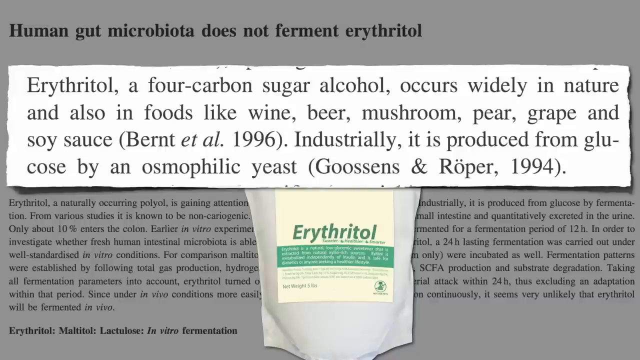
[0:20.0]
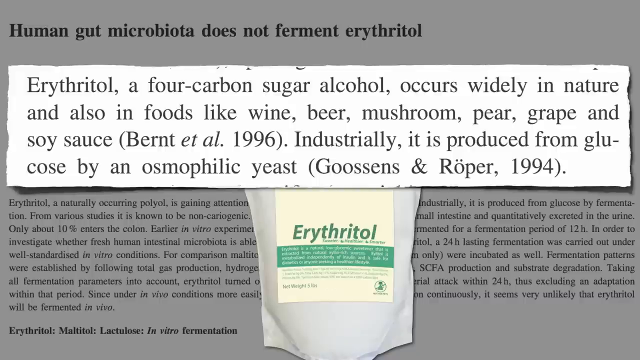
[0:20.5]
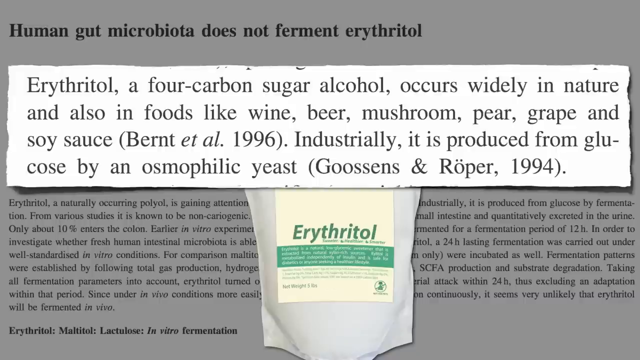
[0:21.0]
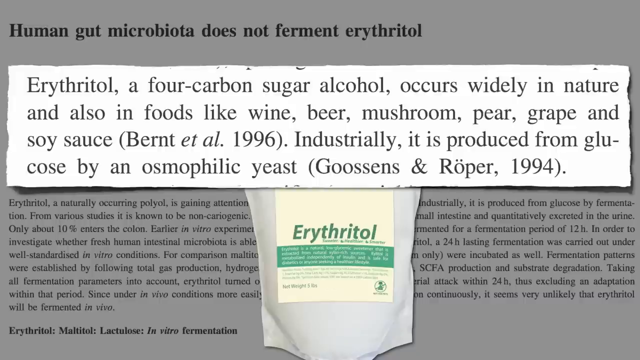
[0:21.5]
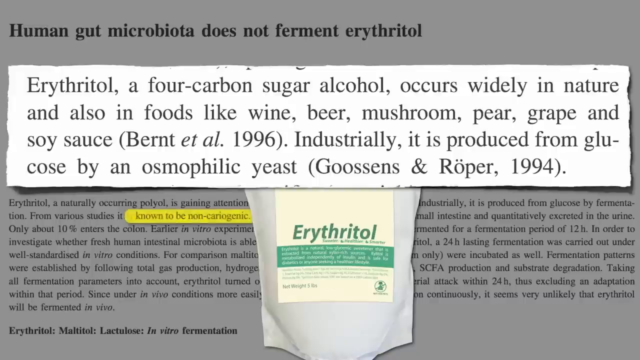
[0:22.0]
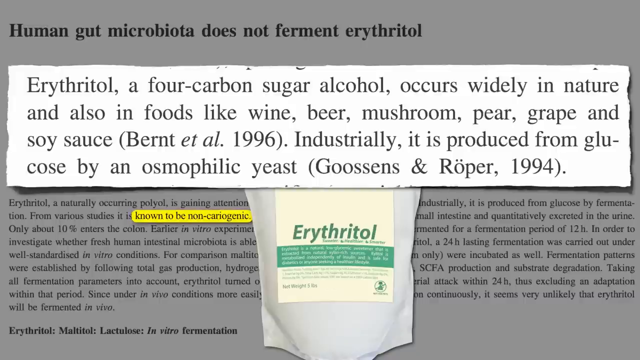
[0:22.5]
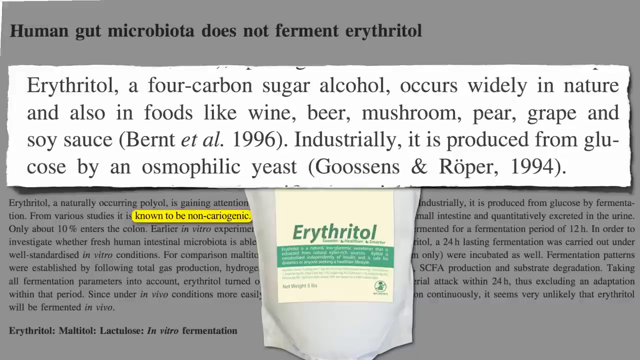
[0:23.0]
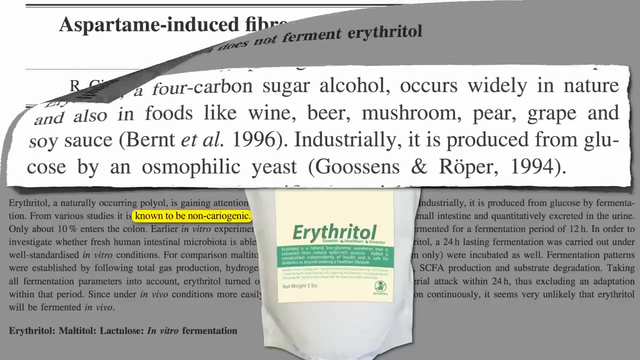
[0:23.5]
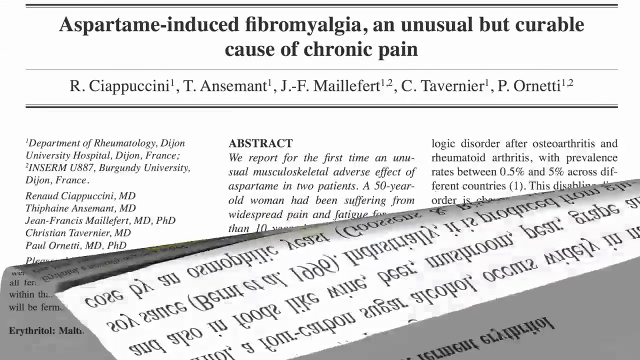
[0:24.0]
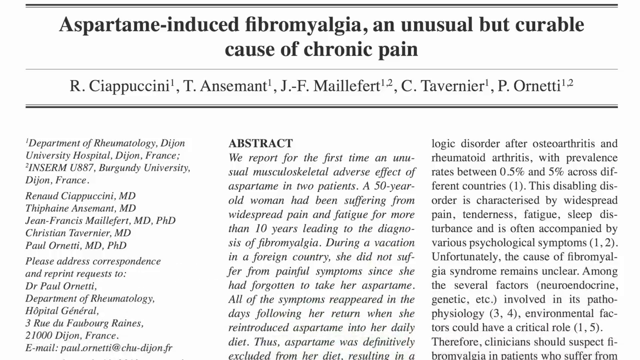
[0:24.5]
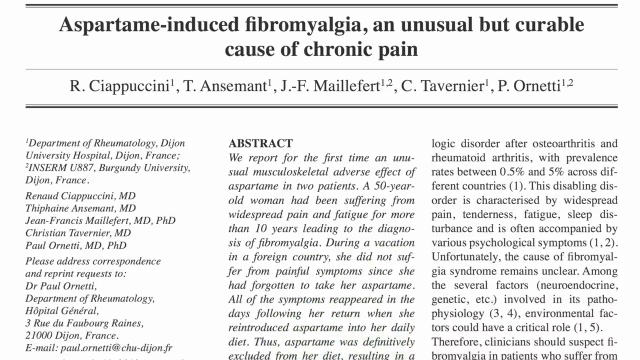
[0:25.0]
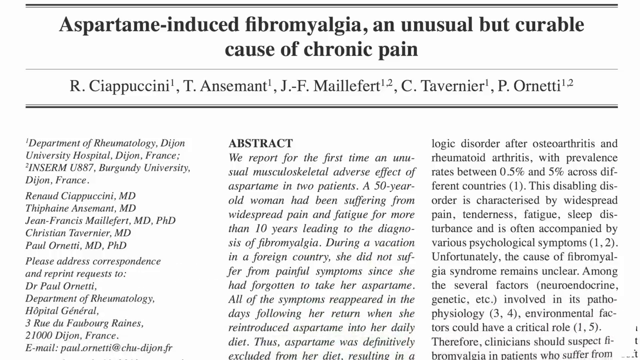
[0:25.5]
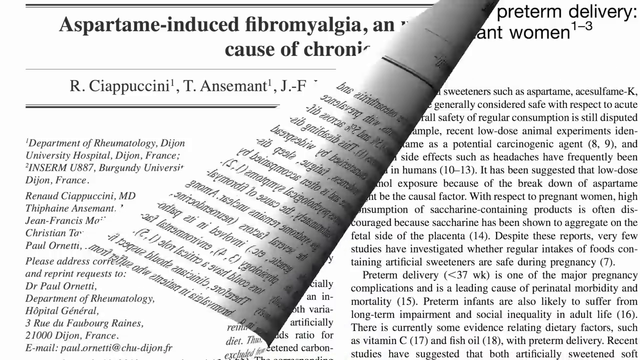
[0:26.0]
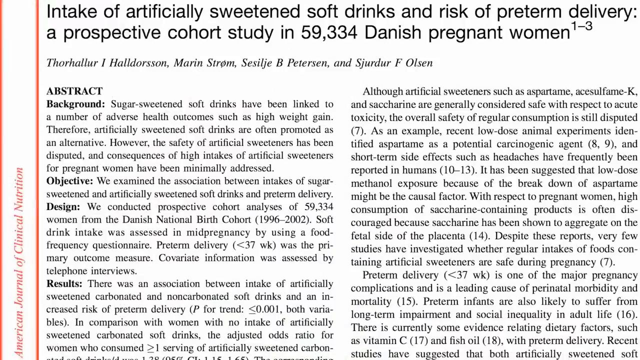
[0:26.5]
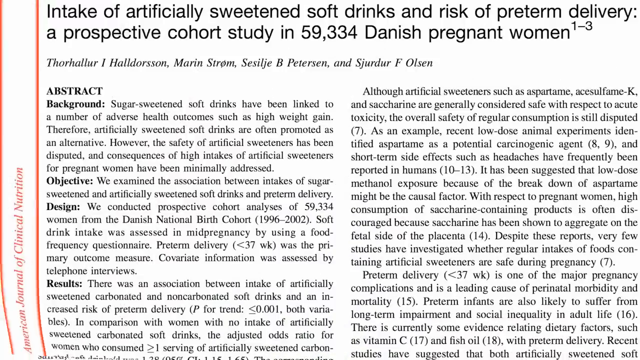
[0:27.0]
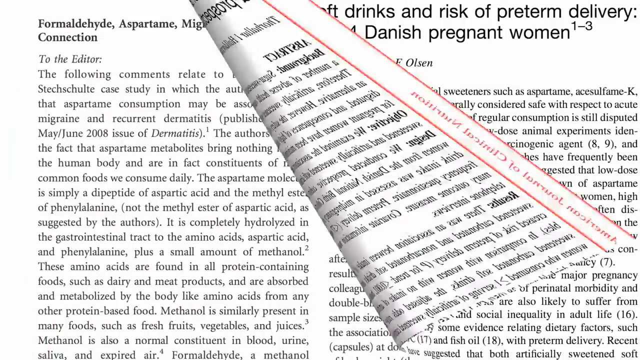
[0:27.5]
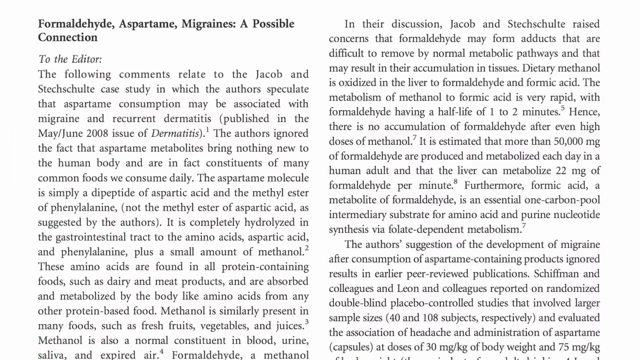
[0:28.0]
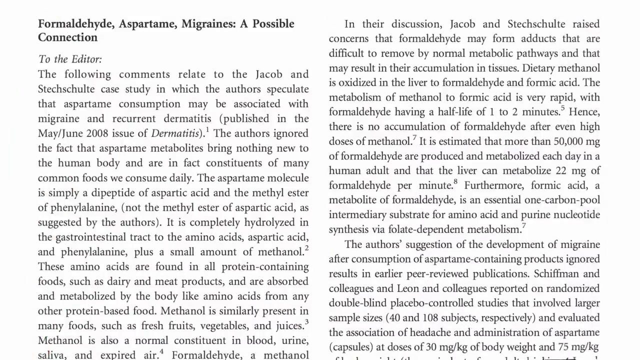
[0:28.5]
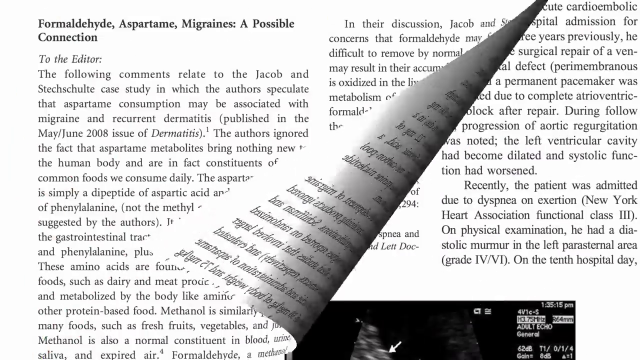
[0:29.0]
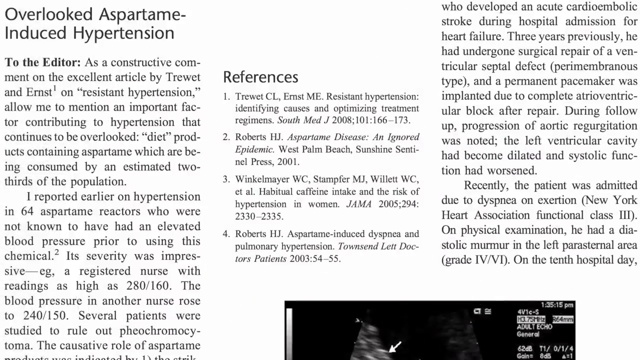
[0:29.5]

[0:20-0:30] What appears to be a bag of erythritol is at the bottom of the screen: a white bag with a tan label and green letters. At the top, black text on a white background reads "human gut microbiota does not ferment erythritol." Below it, bold text on a white background reads: "erythritol, a four-carbon sugar alcohol, occurs widely in nature and also in foods like wine, beer, mushroom, pear, grape, and soy sauce (BERNT et al. 1996). Industrially, it is produced from glucose by osmophilic yeast (Goossens and Roper, 1994)."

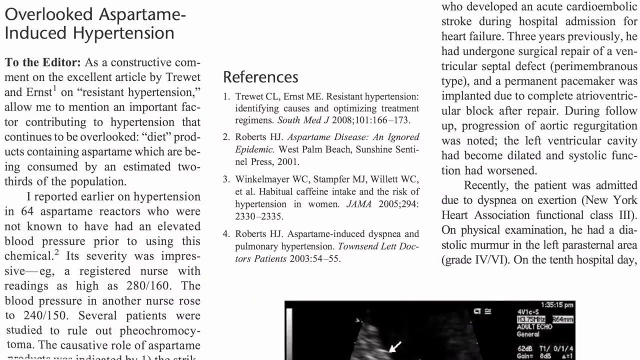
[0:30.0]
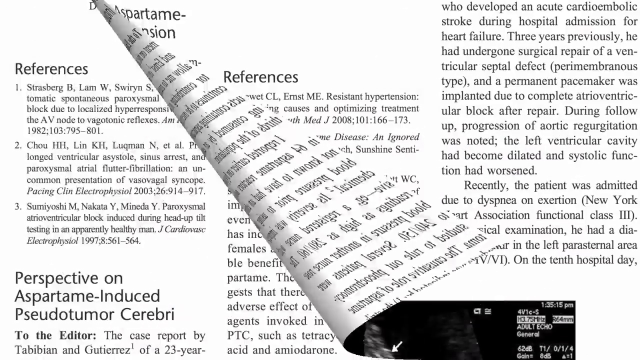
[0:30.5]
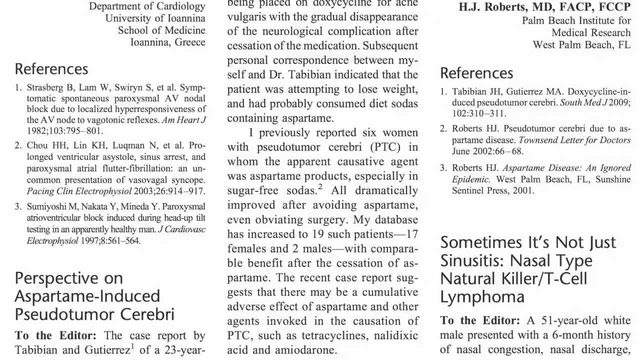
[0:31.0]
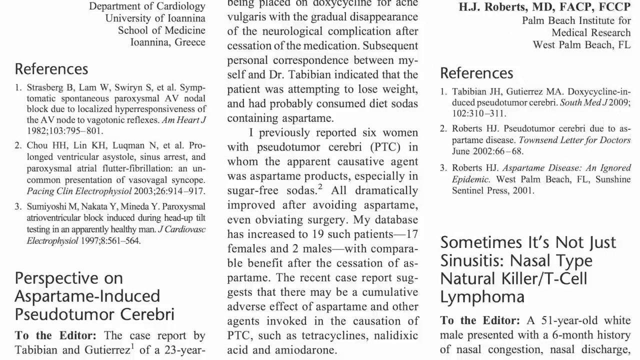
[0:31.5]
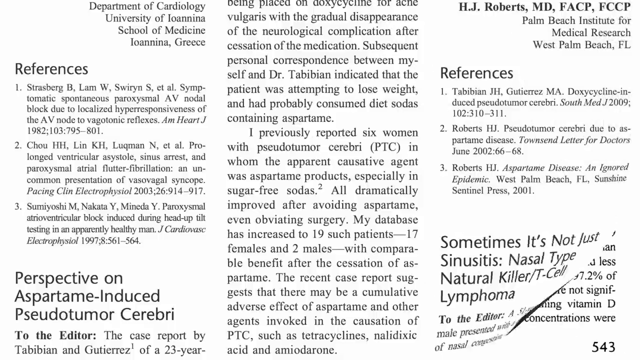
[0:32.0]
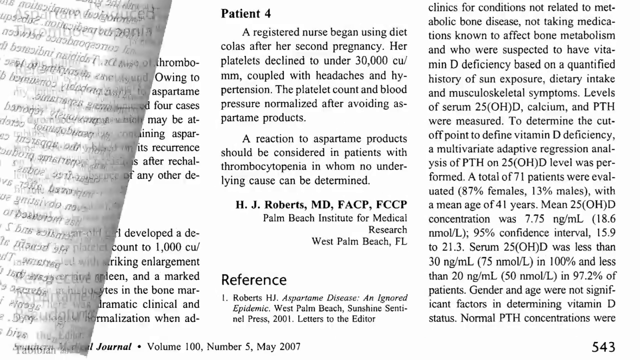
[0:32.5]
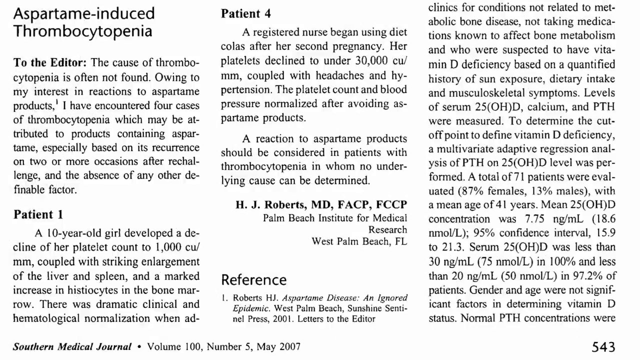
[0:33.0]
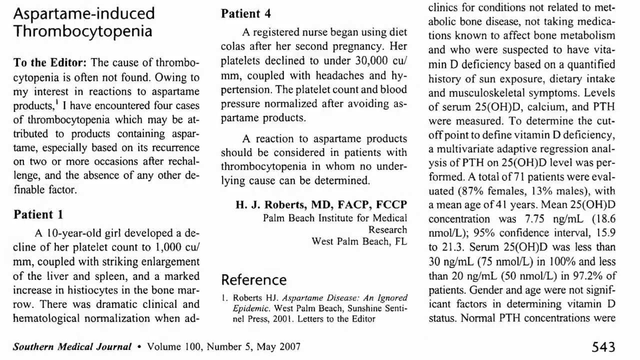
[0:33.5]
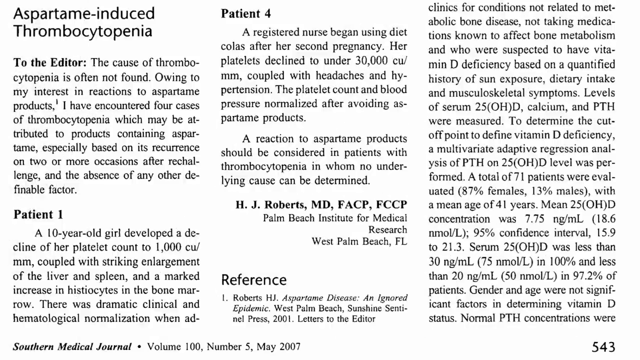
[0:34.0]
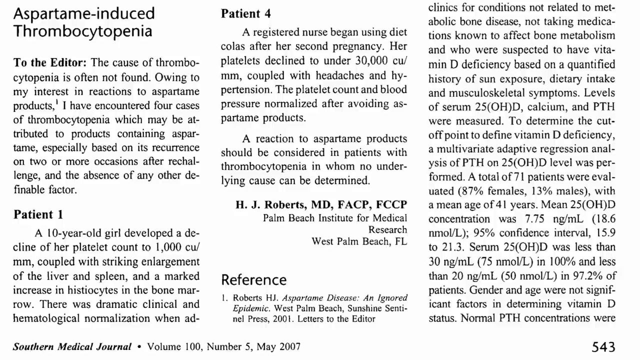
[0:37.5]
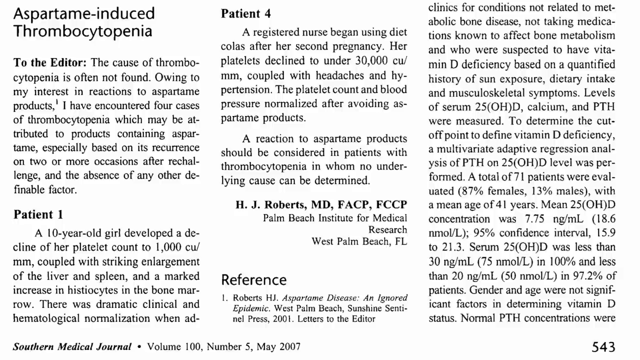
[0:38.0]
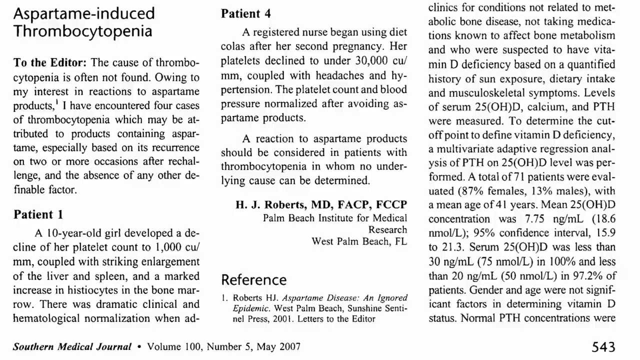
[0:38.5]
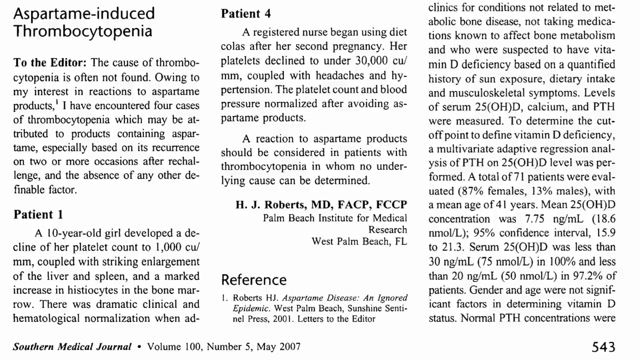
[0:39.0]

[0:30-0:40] A white background with black text appears. The text begins "overlooked aspartame-induced hypertension. To the editor:" and continues: "as a constructive comment on the excellent article by Truett and Ernst on resistant hypertension, allow me to mention an important factor contributing to hypertension that continues to be overlooked:" It goes on to mention products containing aspartame "being consumed by an estimated two-thirds of the population," then reads: "I reported earlier on hypertension in 64 aspartame reactors who were not known to have had an elevated blood pressure prior to using the chemical. Its severity was impressive." It cites a registered nurse with readings as high as 280 over 160, and "The blood pressure in another nurse rose to 240 over 150. Several patients were studied to rule out" before the next word becomes unreadable.